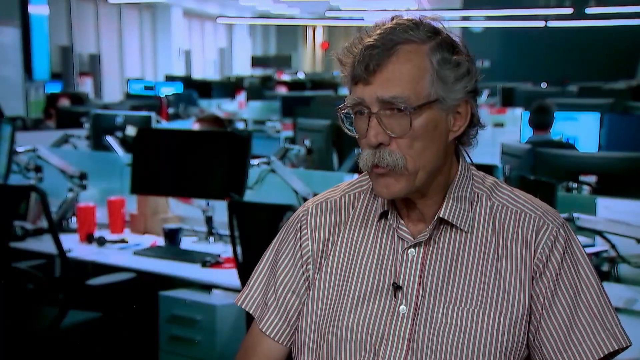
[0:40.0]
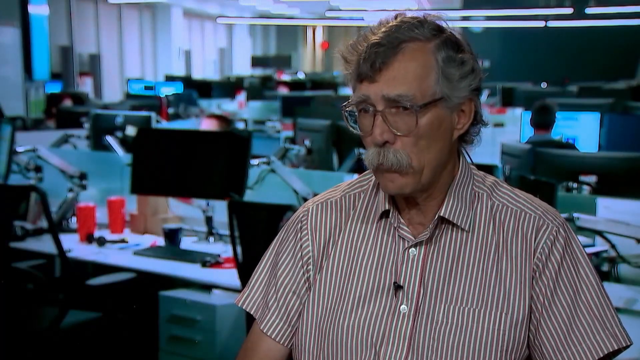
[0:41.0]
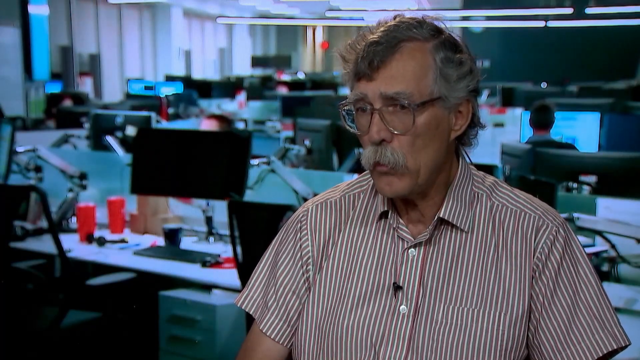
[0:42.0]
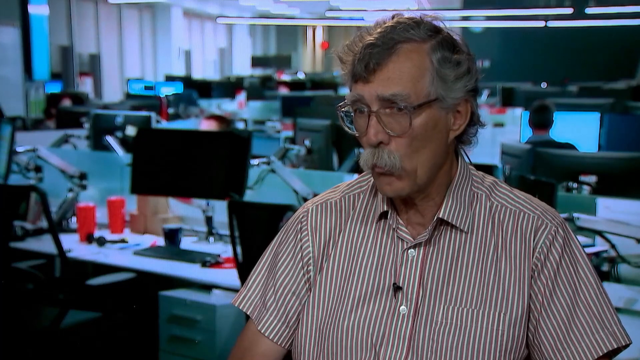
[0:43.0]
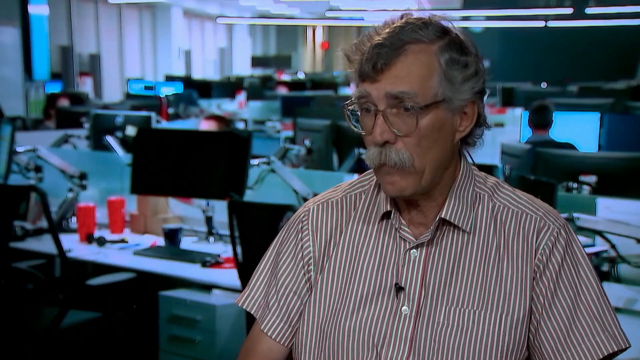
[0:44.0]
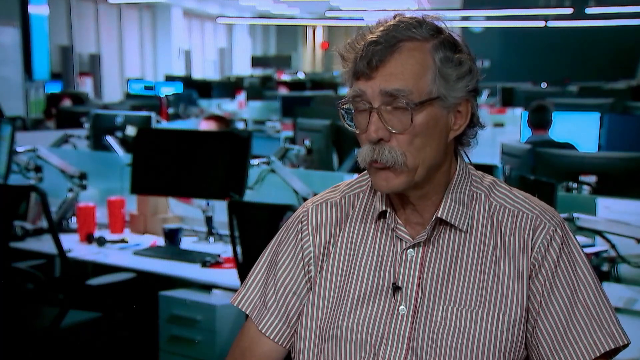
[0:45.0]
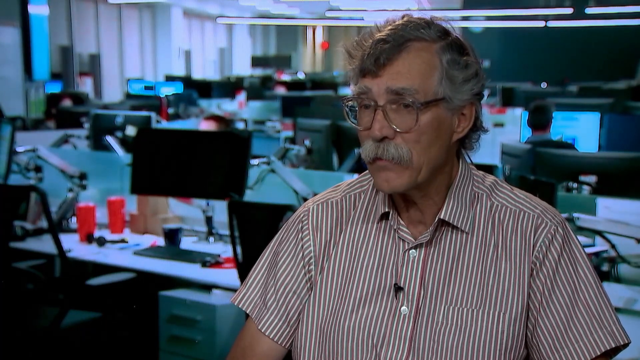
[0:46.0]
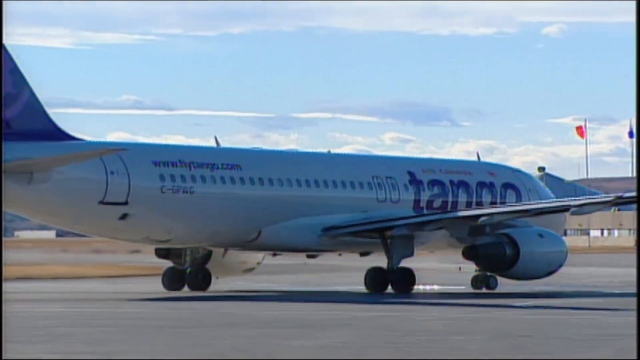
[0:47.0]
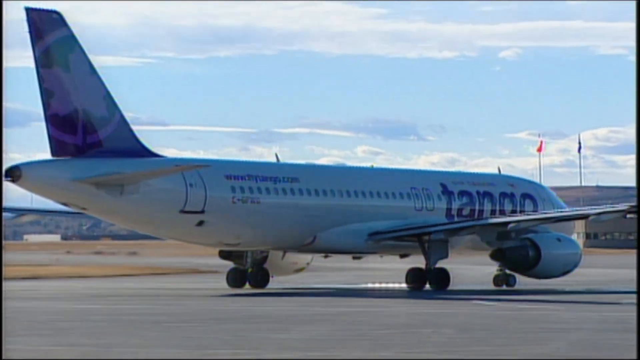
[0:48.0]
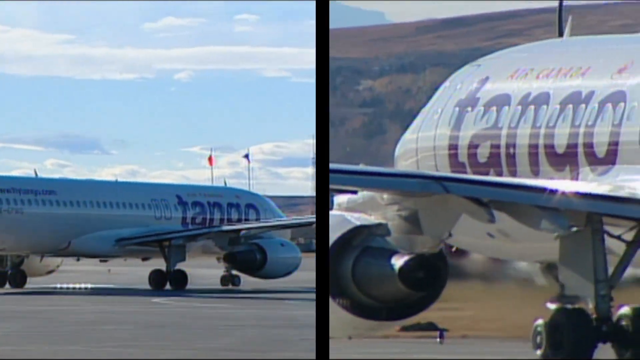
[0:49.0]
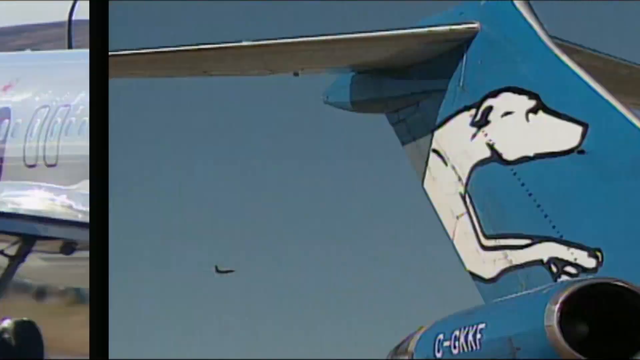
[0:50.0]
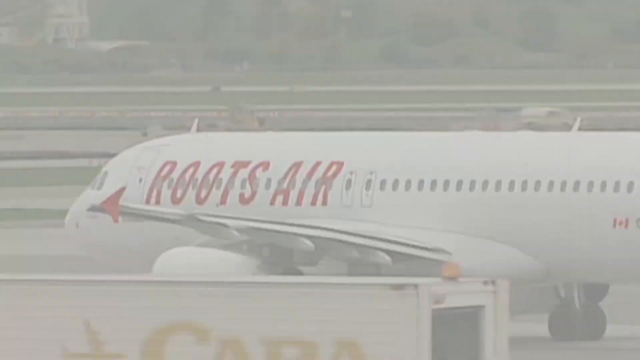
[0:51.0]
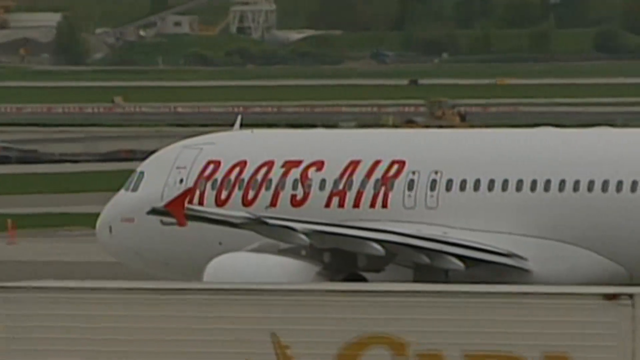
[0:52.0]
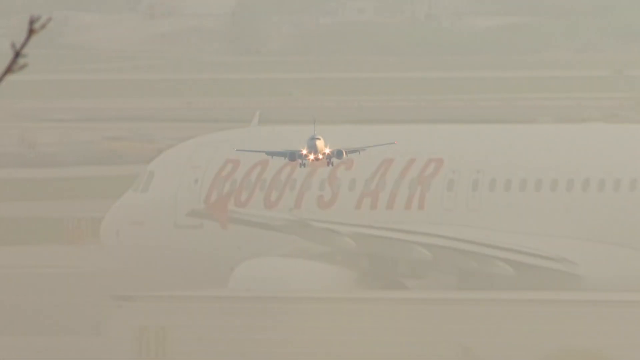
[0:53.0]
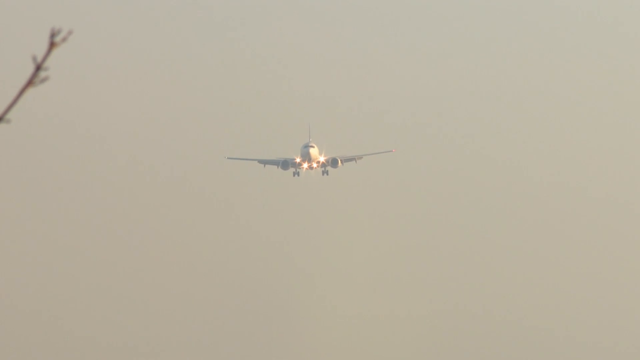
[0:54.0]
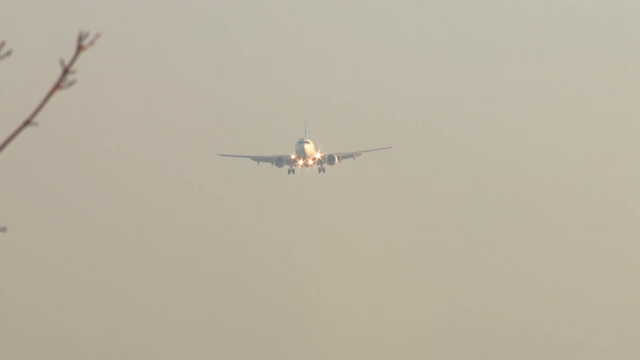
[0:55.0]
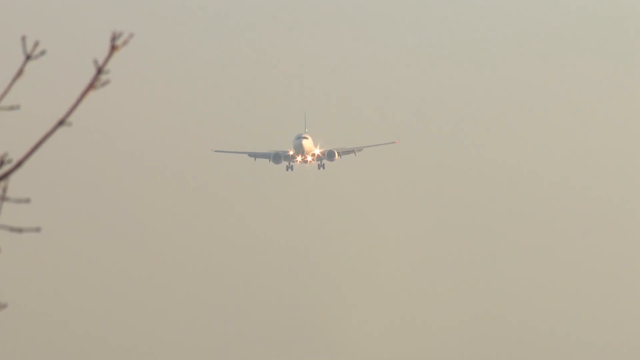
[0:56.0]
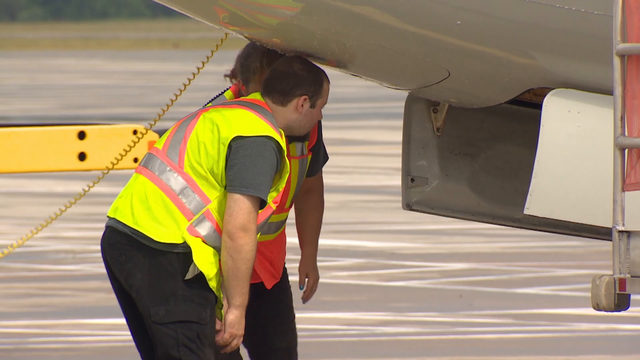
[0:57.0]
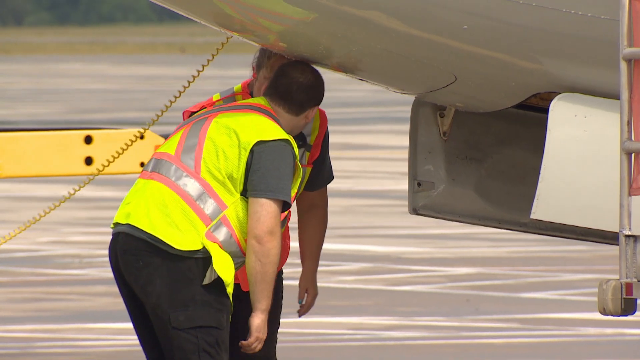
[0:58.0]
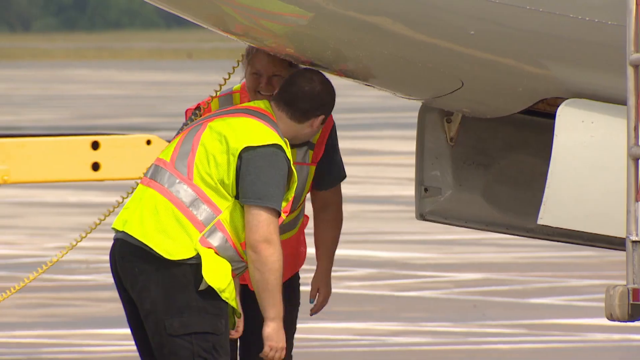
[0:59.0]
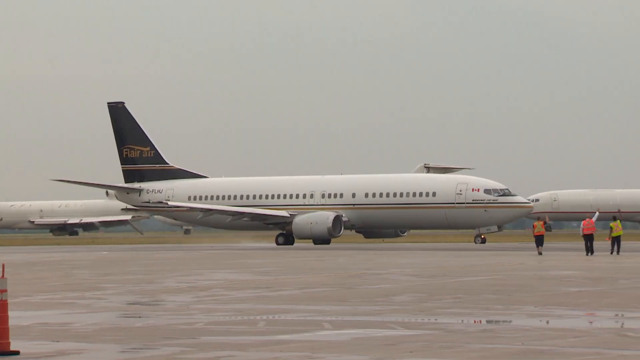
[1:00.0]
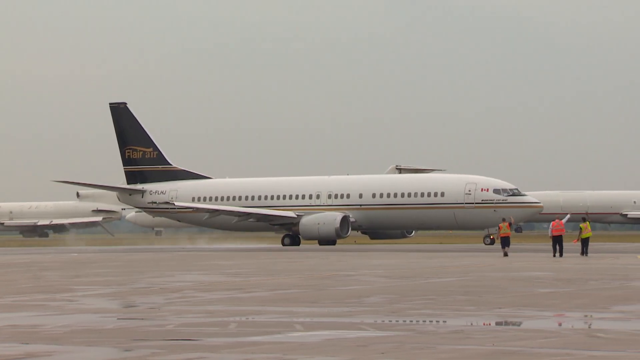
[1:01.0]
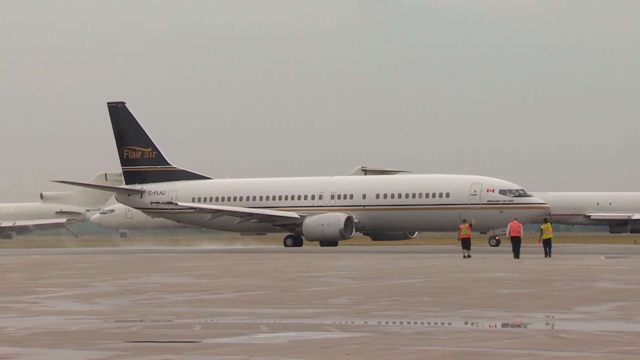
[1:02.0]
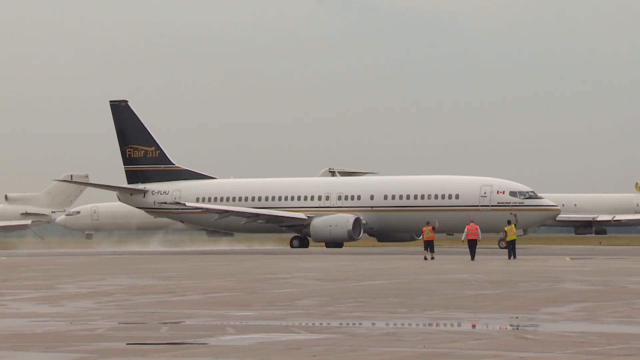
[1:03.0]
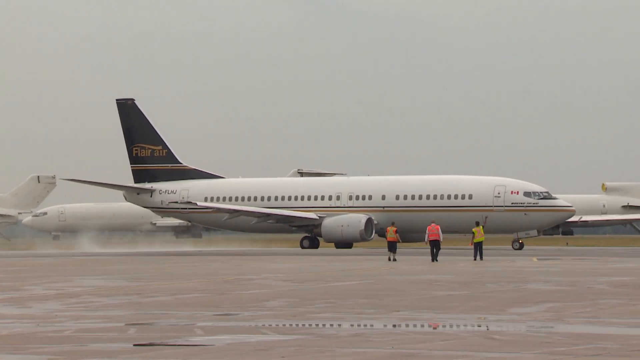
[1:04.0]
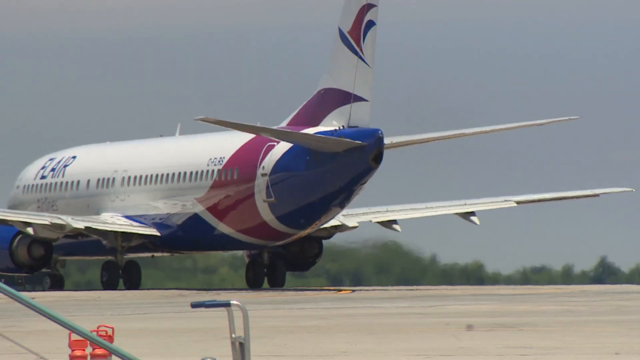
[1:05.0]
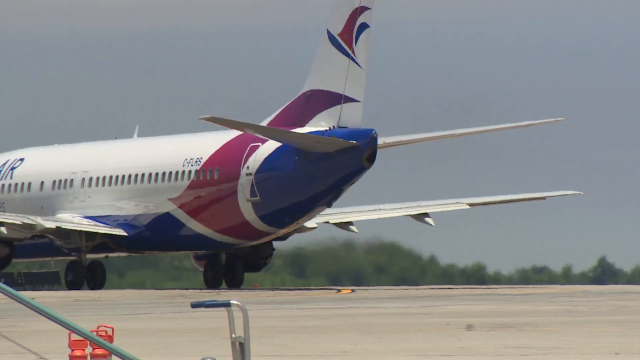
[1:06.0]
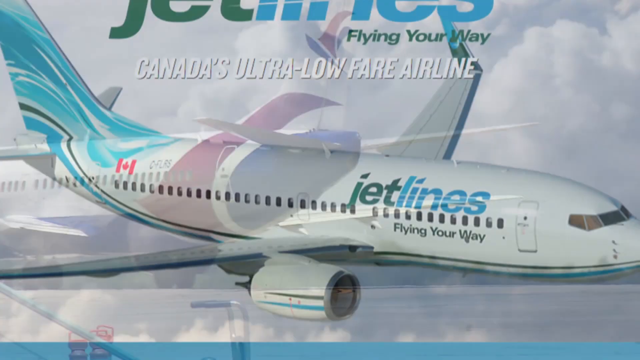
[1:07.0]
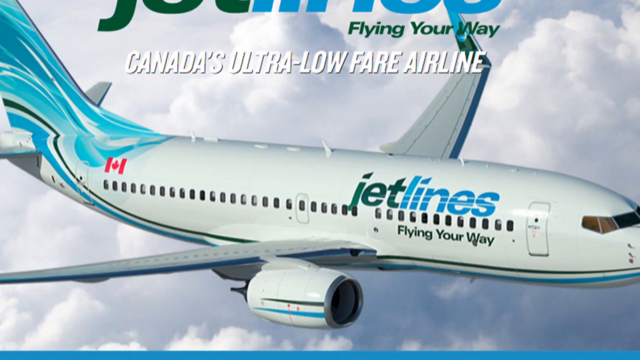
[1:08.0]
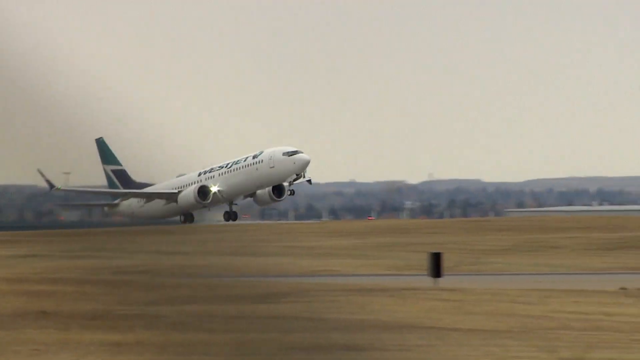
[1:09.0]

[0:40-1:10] An old man gives an interview in what appears to be an office building. He wears a pink and white striped button-up shirt and large pinkish-framed glasses. Behind him are multiple desks and computer stations, one of which is manned, above his right shoulder. He talks into the screen, nodding emphatically as he speaks. The video cuts to an airplane labeled "Tango" on the side, moving left to right on a tarmac, and then to a split screen with two views side by side, one on the left and one on the right, both showing airplanes labeled "Tango". Briefly, an airplane branded with red "Roots Air" lettering on its side is shown lining up for either landing or takeoff, moving from right to left. Next, a view of the sky shows an airplane starting to land, with four lights on its underside and its wheels out. Two people in reflective vests, one yellow and one orange, look at the wheel of a parked plane. Finally, a different airplane, branded "Flare Air" with a brown tail fin, runs along the airstrip.